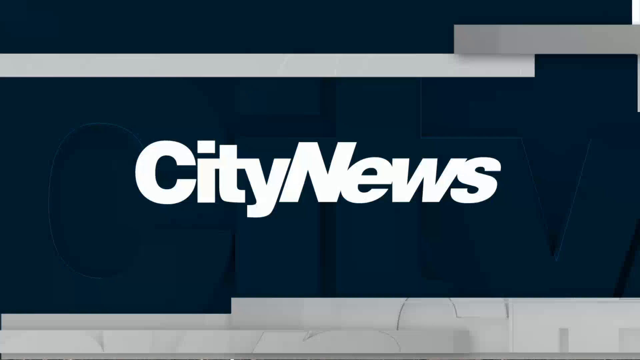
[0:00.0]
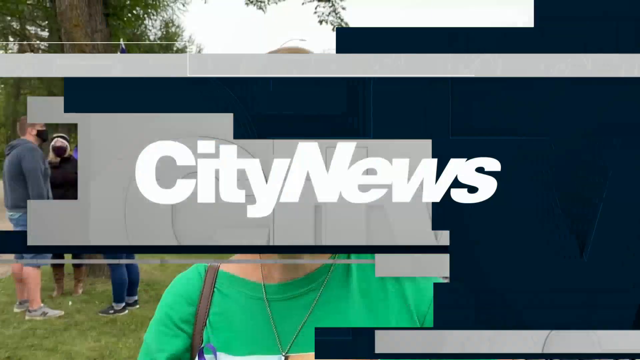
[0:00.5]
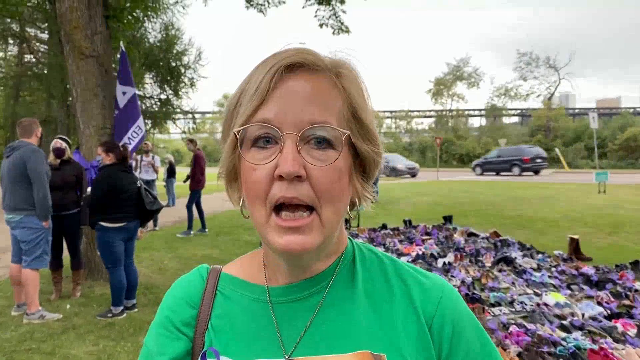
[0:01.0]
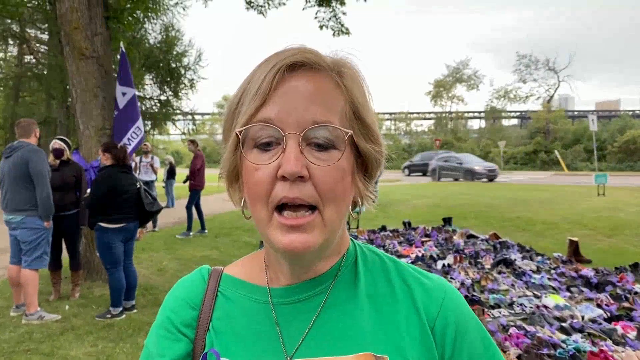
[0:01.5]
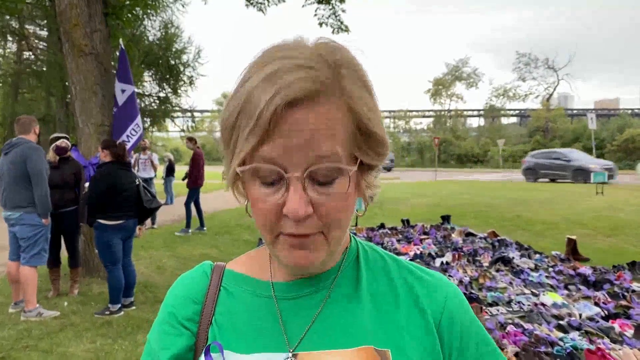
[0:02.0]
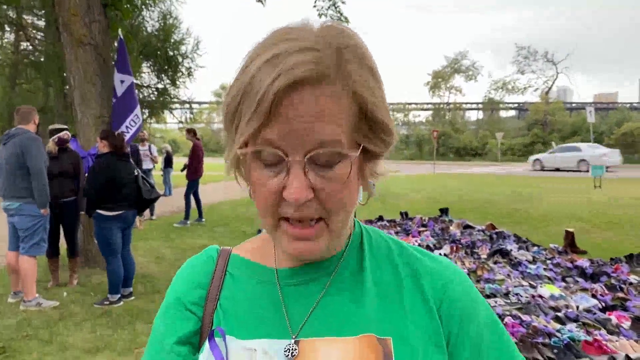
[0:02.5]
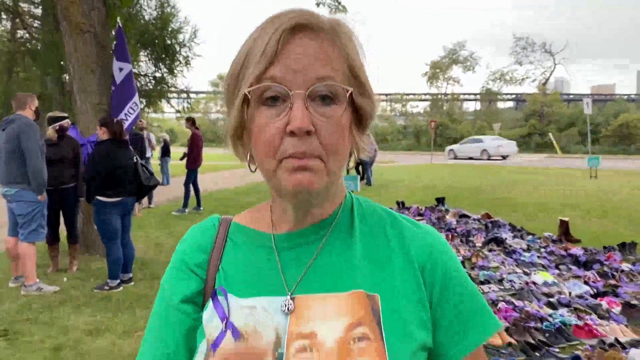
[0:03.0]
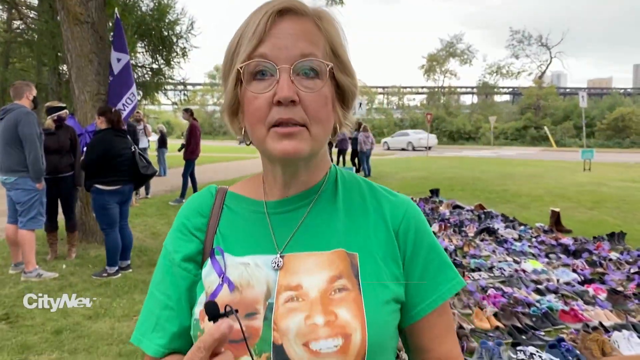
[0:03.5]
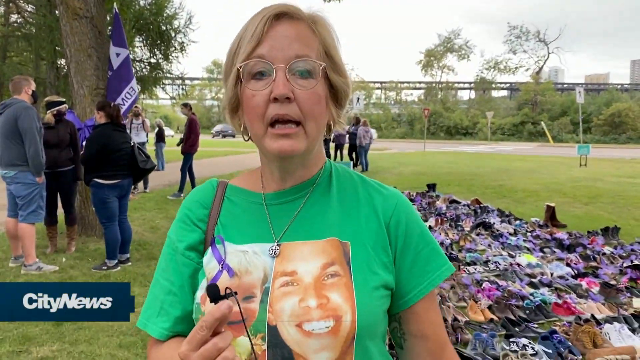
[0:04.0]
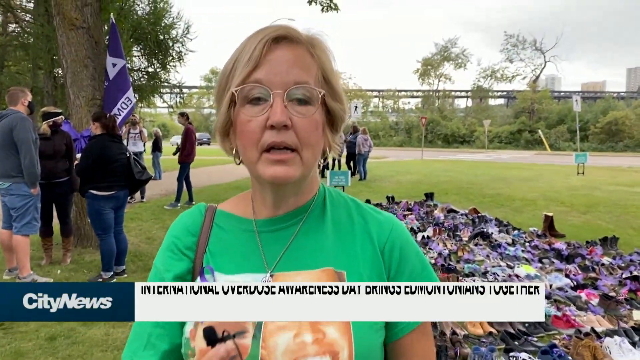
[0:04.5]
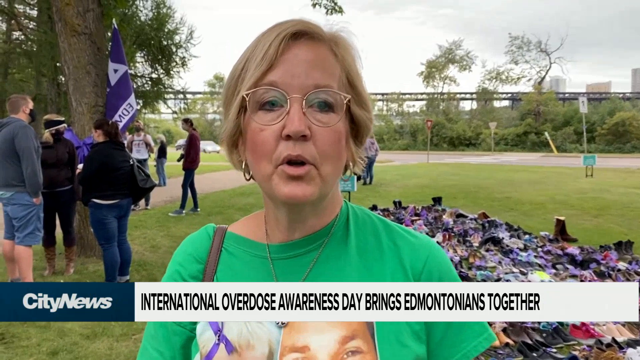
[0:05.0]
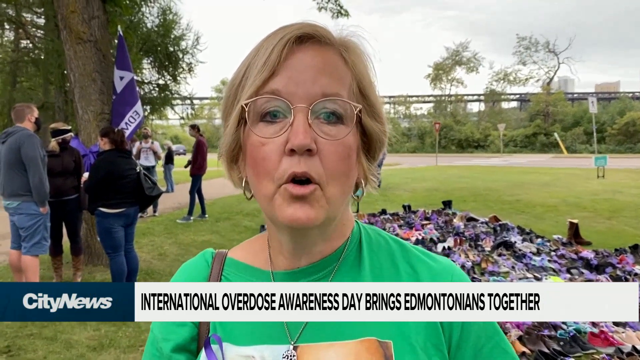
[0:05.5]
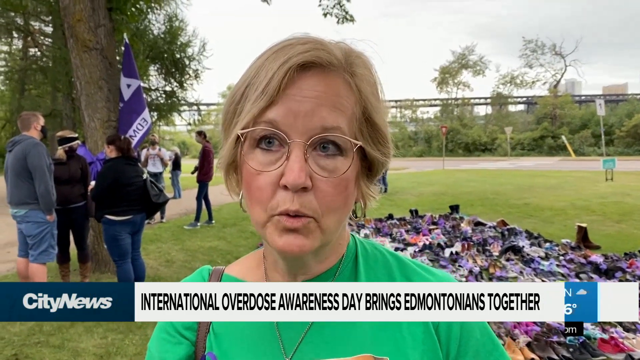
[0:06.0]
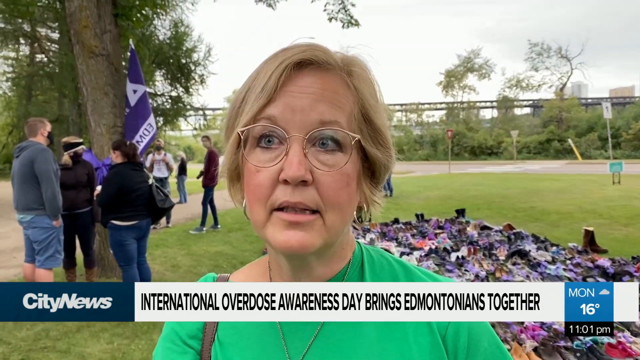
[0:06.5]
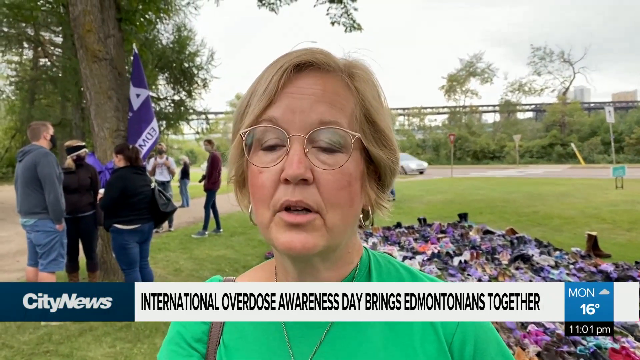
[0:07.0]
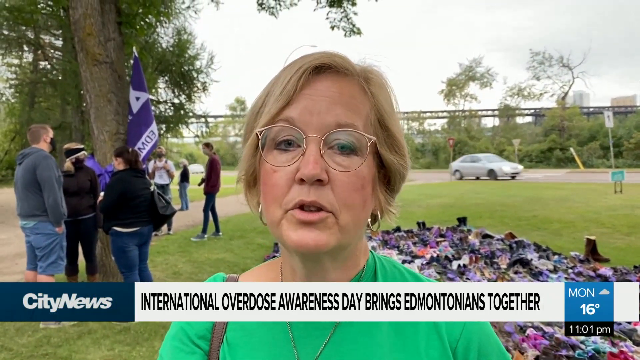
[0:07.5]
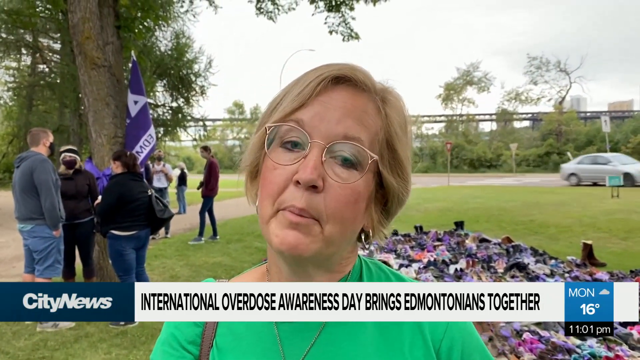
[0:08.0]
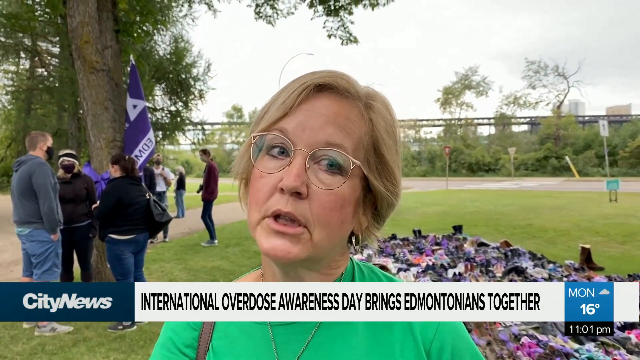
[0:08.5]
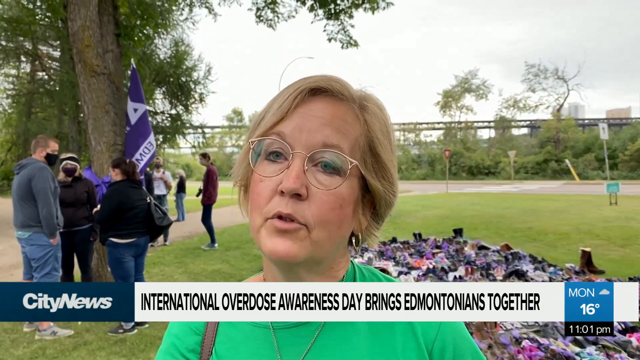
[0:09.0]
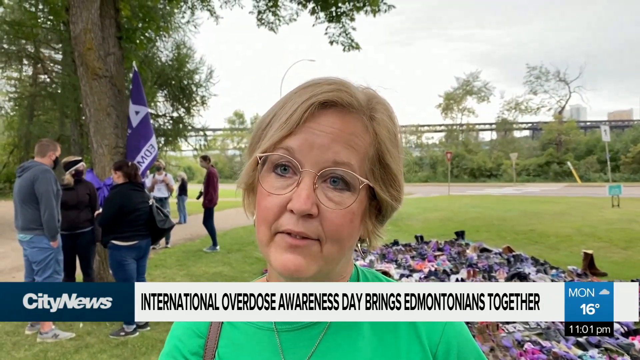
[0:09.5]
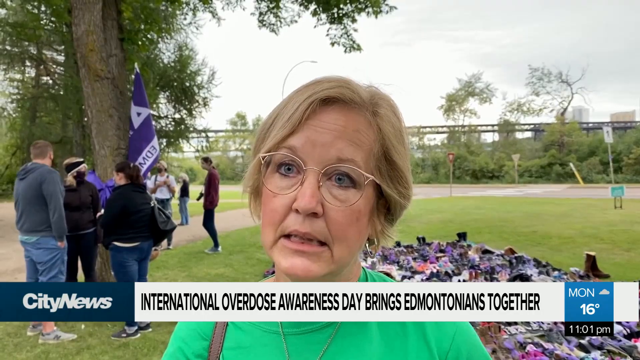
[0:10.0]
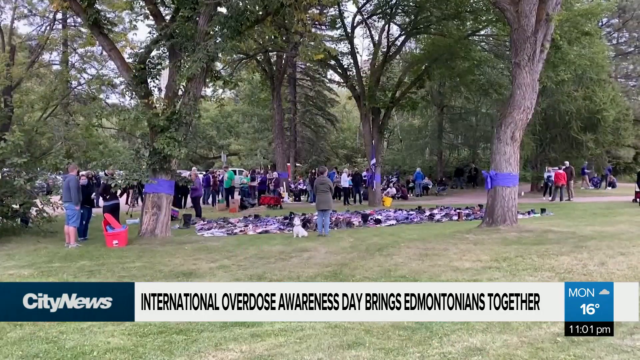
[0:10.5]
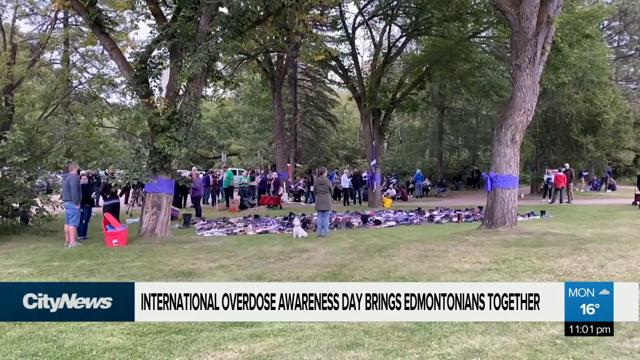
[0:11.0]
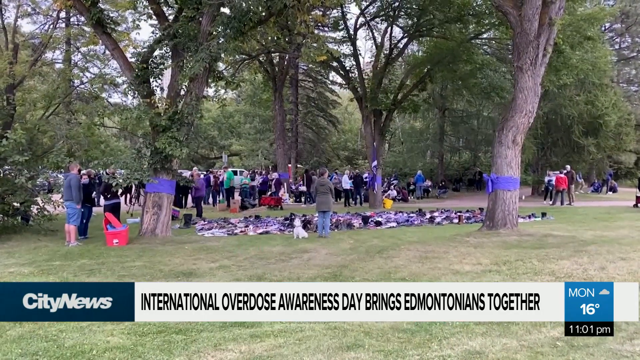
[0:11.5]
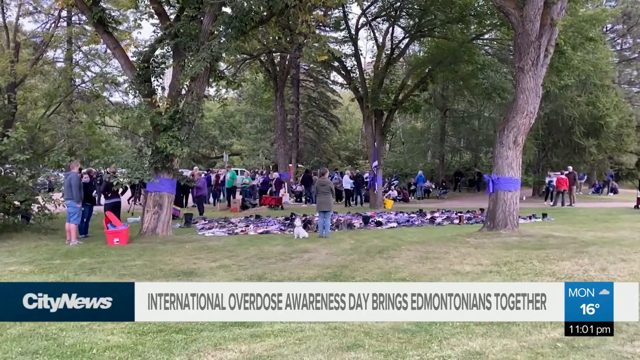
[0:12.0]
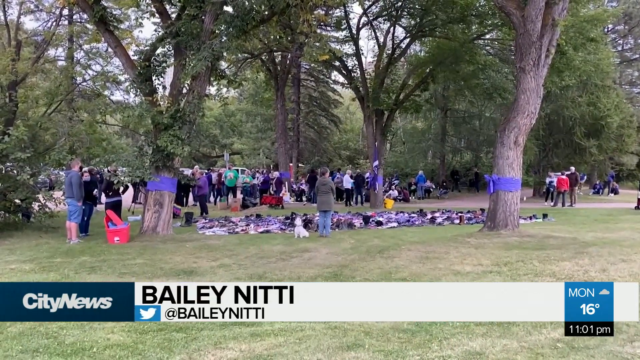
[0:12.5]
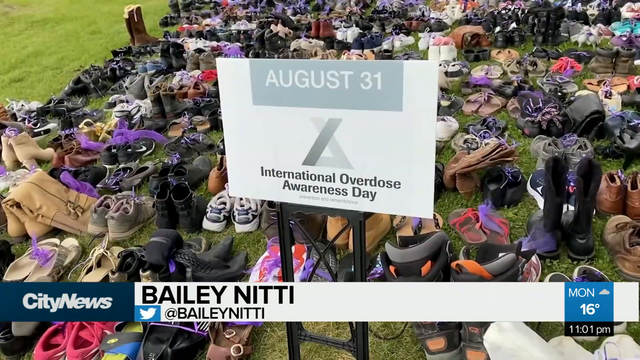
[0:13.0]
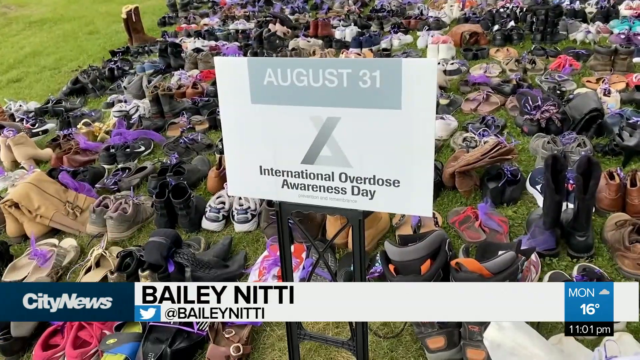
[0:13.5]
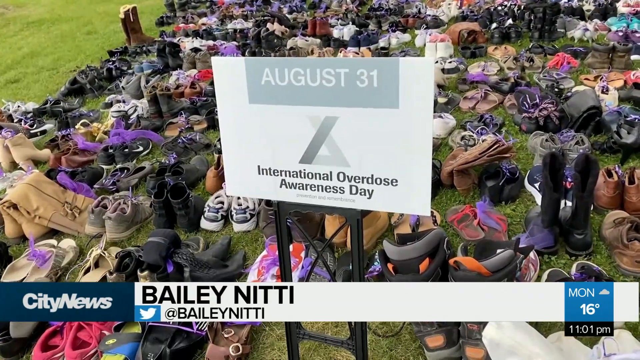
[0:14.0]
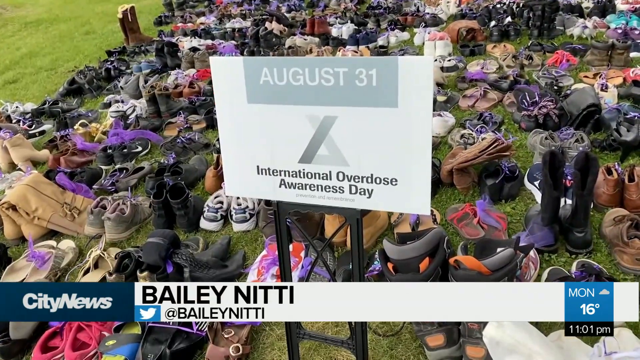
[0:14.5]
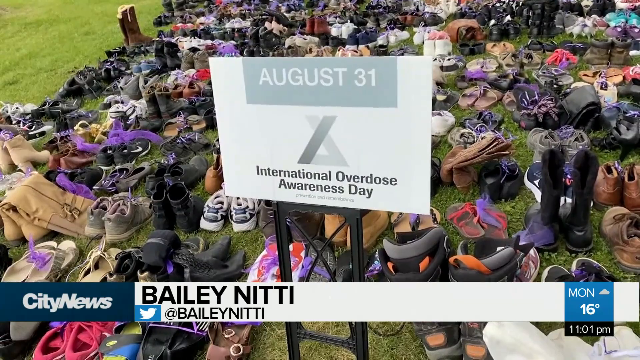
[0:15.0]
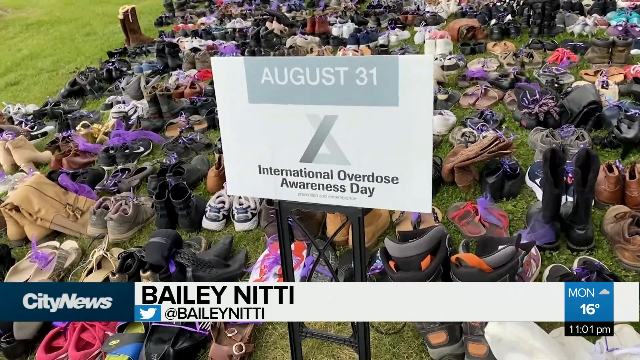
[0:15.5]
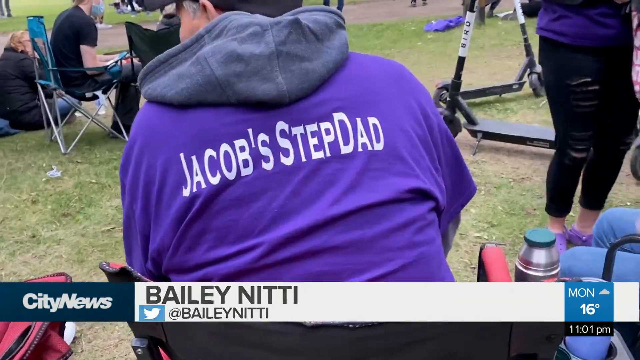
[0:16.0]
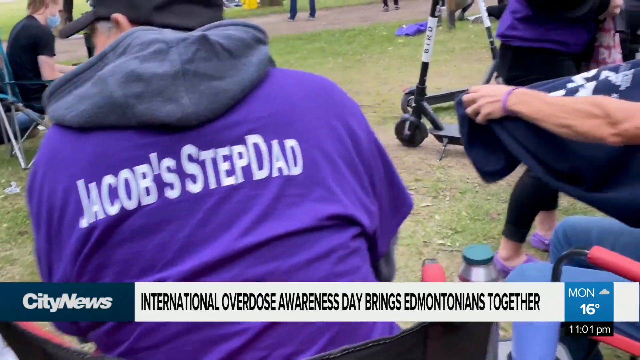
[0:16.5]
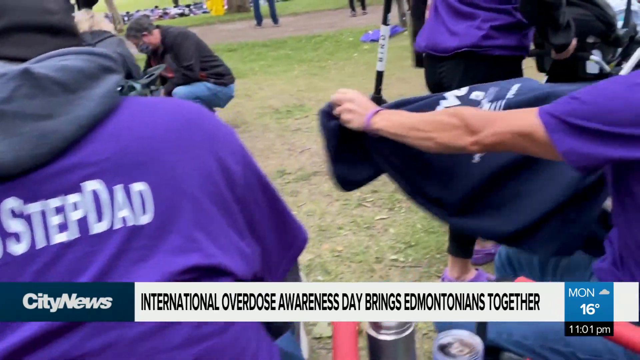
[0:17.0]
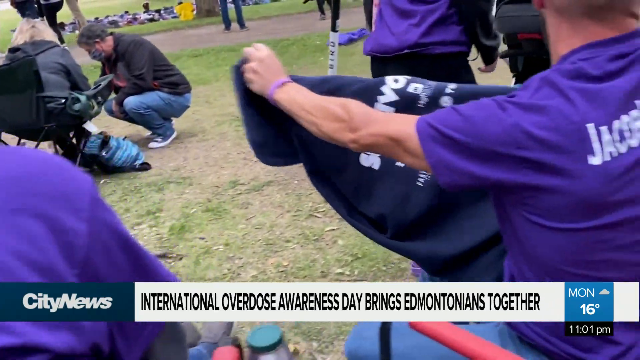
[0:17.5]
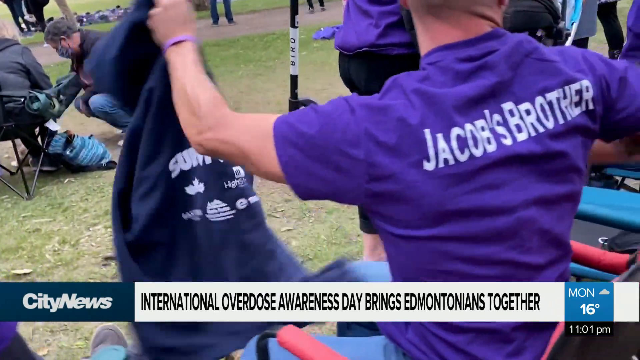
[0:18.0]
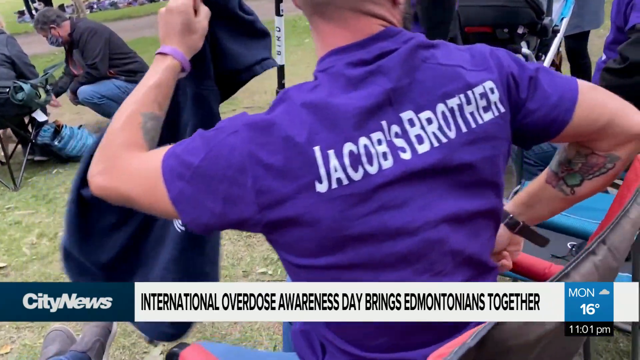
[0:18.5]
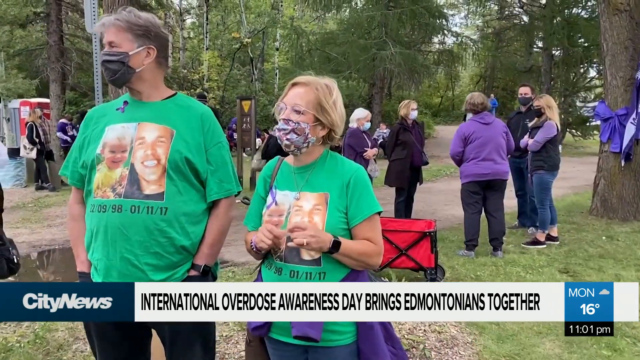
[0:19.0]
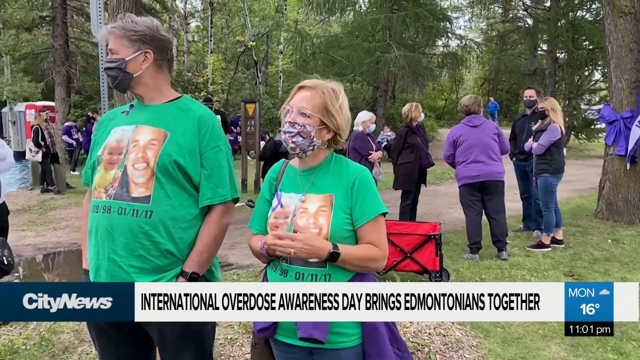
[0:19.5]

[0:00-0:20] A blue screen with some white lines appears with "City News" written on it. As the blue screen and the writing disappear, a woman stands holding a microphone, wearing a green t-shirt with some pictures printed on it. Headlines from City News run below: "International Overdose Awareness Day brings Edmontonians together." The day is Monday, the temperature is 16, and the time is 11:01 p.m. In the background are a collection of shoes and a billboard with writing that includes "August 31 International." Two people wear the same green uniform as the woman who was speaking with the microphone; one is a woman and the other a man. They wear masks and green t-shirts with pictures printed on them. Other people wear purple t-shirts with writing on the back, such as "Jacob's stepdad" and "Jacob's stepbrother."